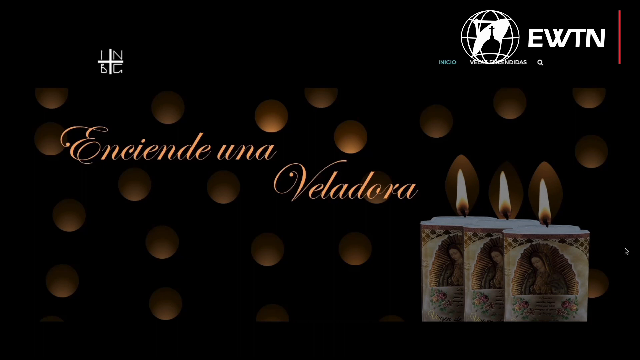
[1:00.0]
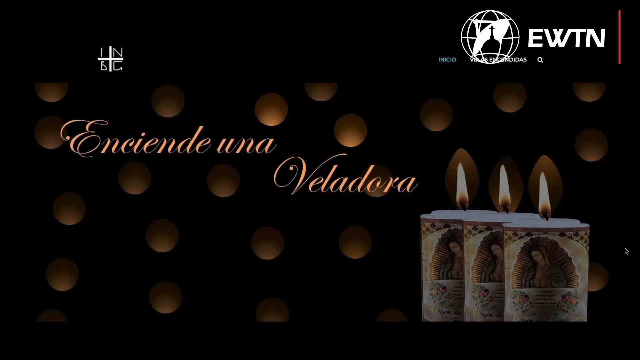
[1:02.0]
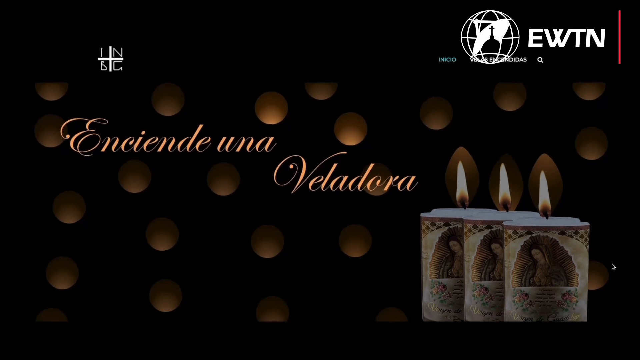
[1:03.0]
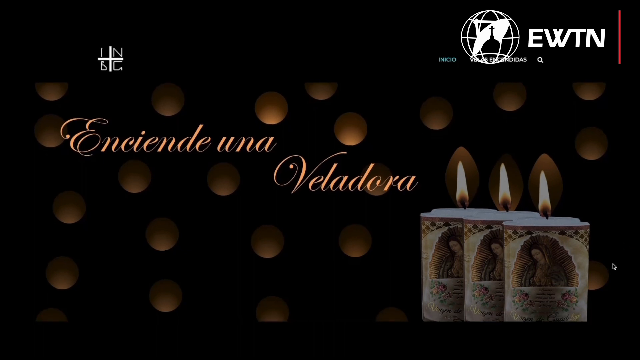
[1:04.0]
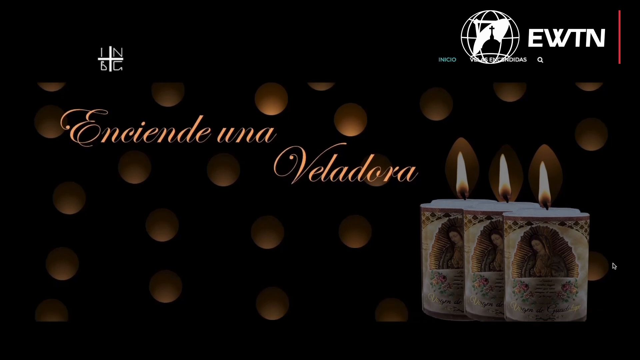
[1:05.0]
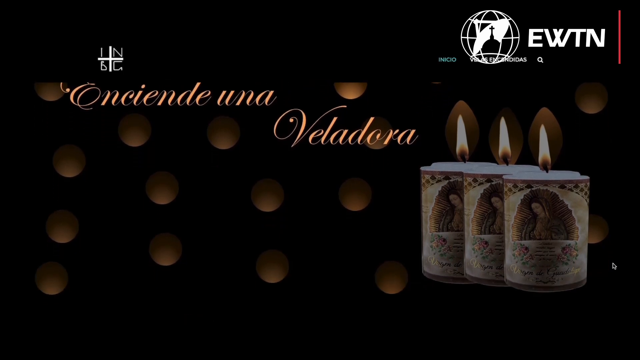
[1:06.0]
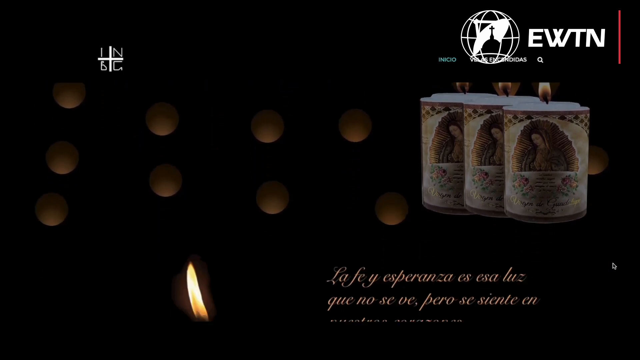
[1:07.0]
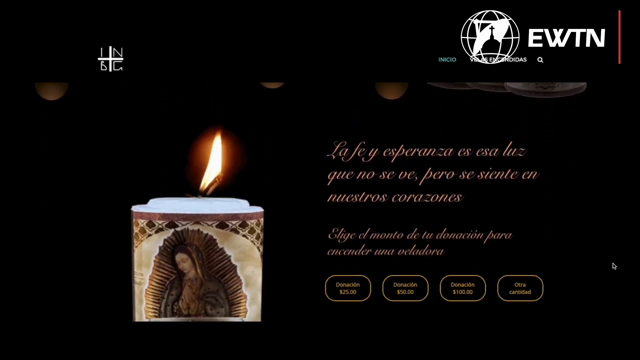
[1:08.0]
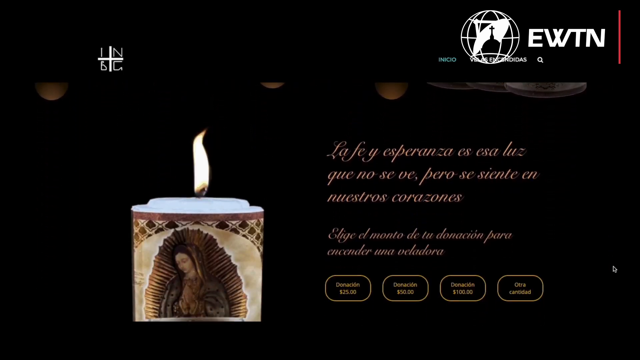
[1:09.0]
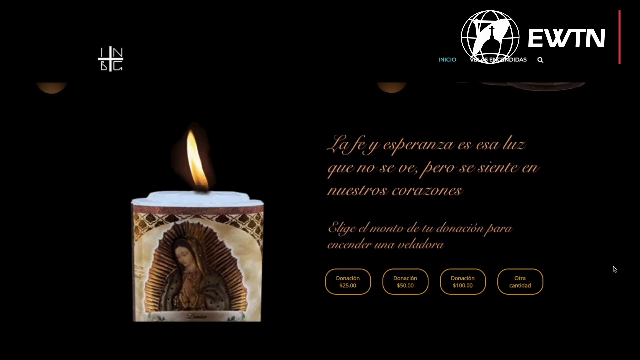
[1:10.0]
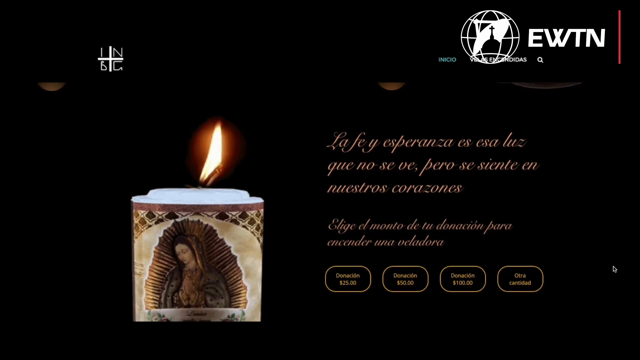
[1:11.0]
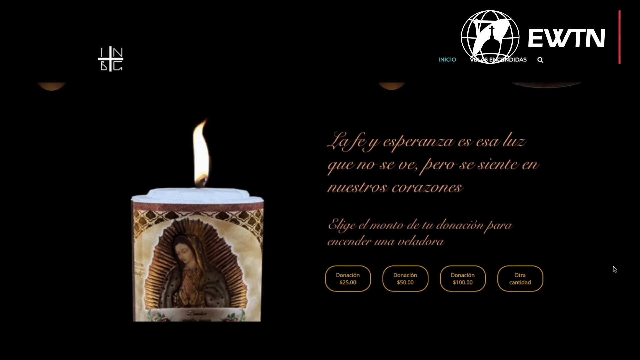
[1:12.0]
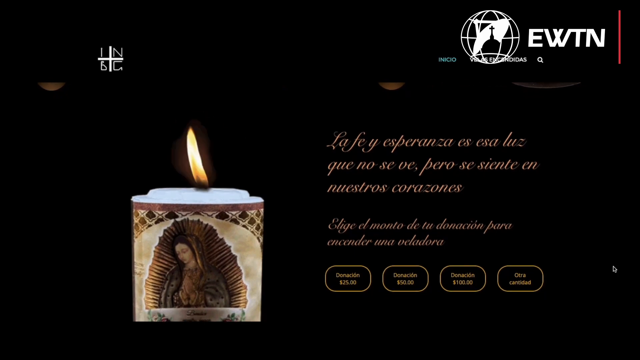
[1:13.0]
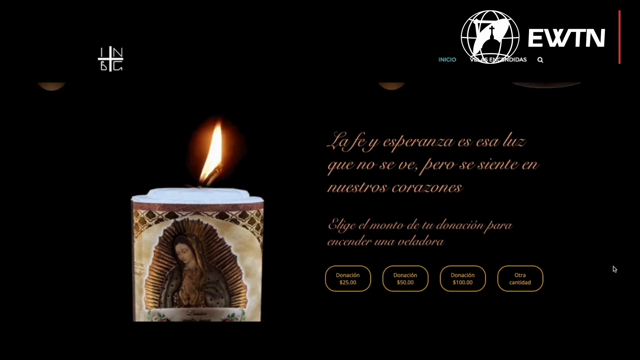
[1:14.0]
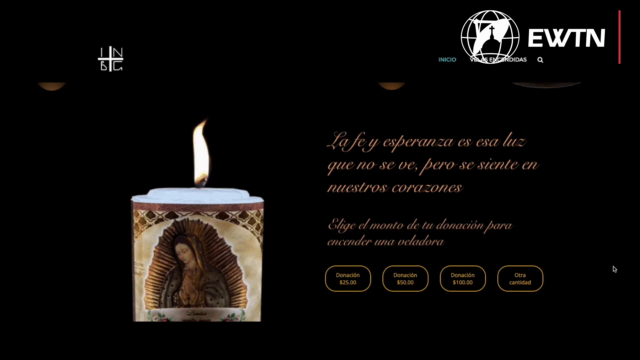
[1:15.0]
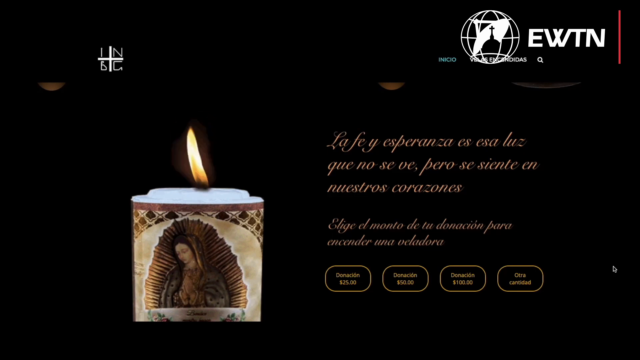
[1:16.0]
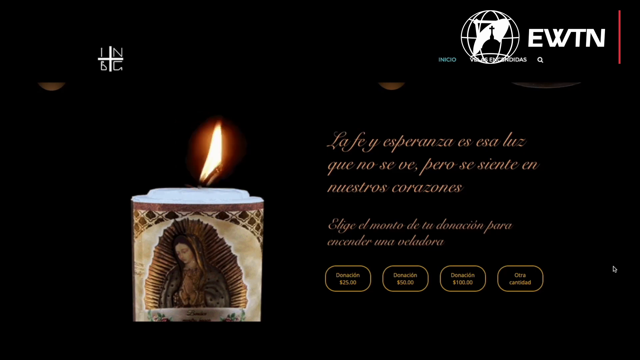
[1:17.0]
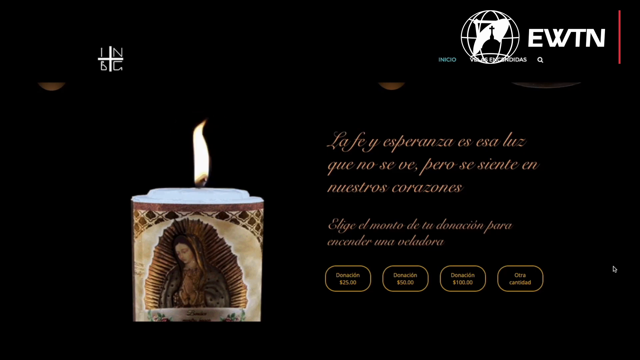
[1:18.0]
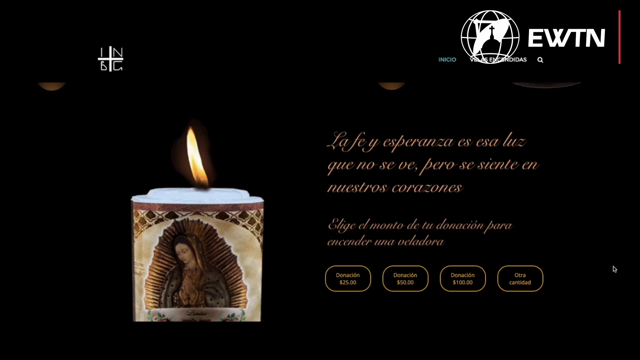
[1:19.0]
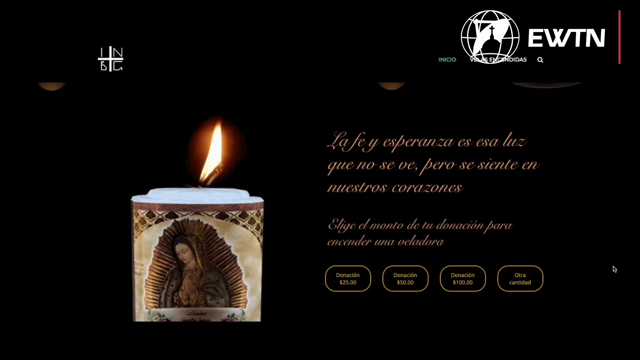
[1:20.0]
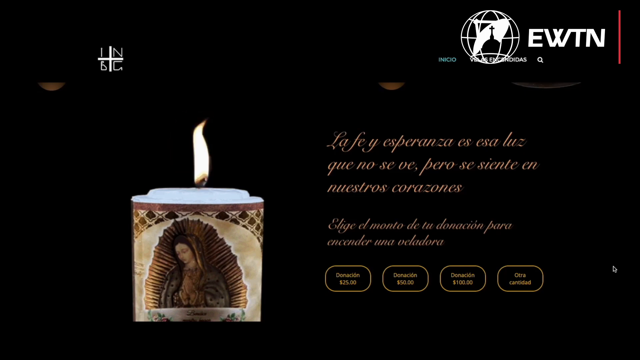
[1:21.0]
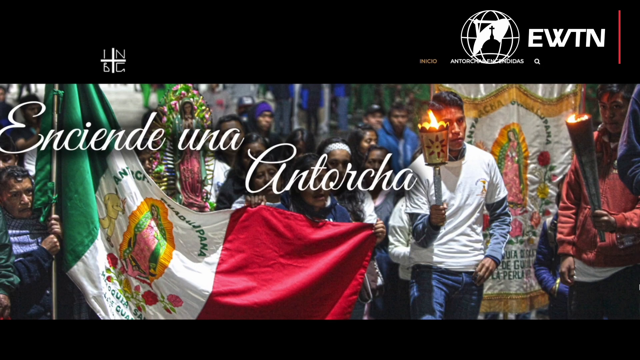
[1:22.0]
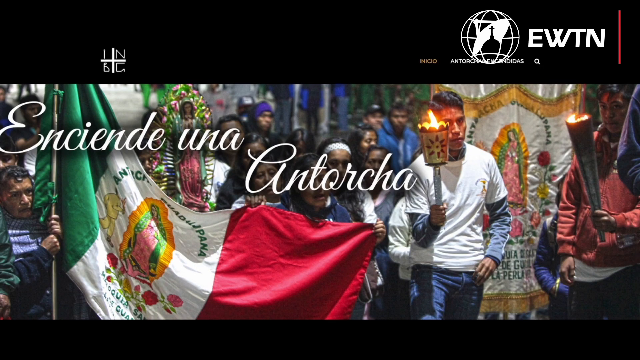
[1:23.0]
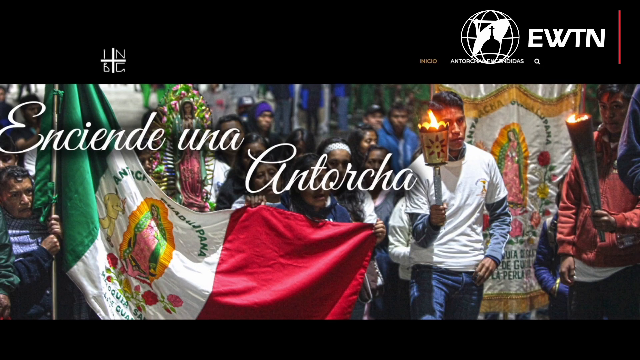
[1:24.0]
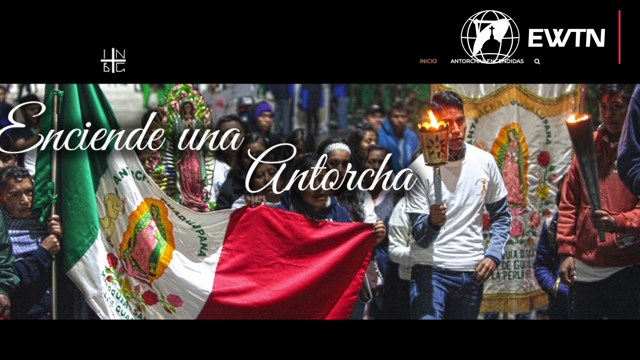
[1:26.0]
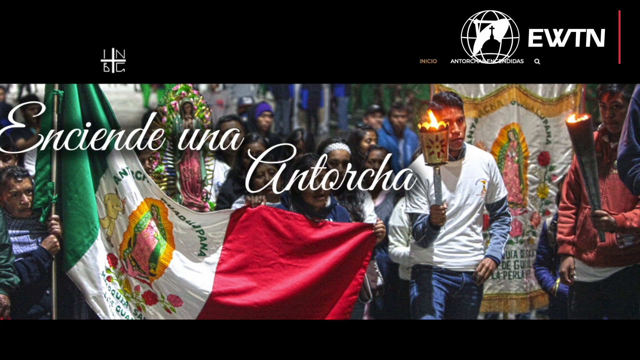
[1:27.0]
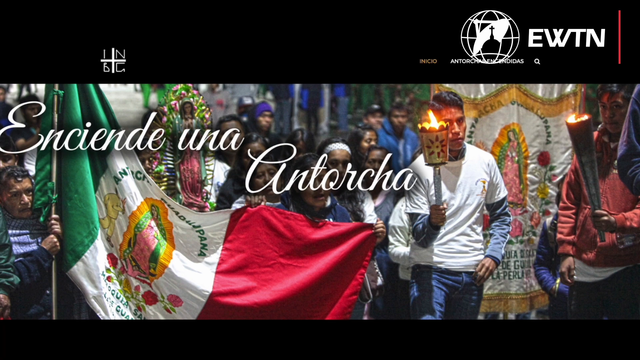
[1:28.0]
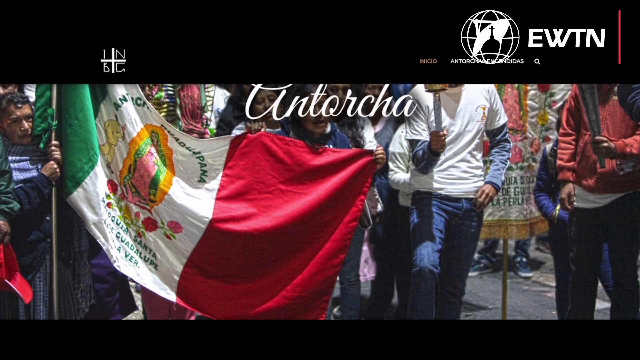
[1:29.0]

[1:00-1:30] The slide stays up before kind of panning down to the next slide, which appears to ask for donations and could be a website. A large candle on the left is flickering, while icons on the right at the bottom say donation in Spanish. There are four options: $25, $50, $100, and a fourth that is apparently for giving your own amount. The page also has Spanish text: "La fe y esperanza es esa luz que no se ve pero se siente en nuestros corazones." The page is likely asking for a monetary donation. The candle image is a gif: its light kind of goes back and forth, and the wax does not appear to melt as time goes on. The scene then changes to individuals holding a flag similar to the earlier flag, with two individuals holding a lit candle or fire, and there appear to be multiple individuals behind them marching or walking in unison.